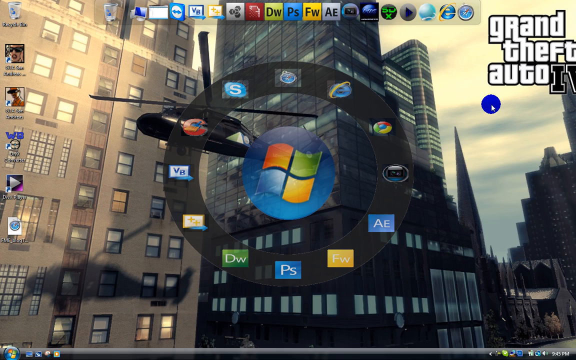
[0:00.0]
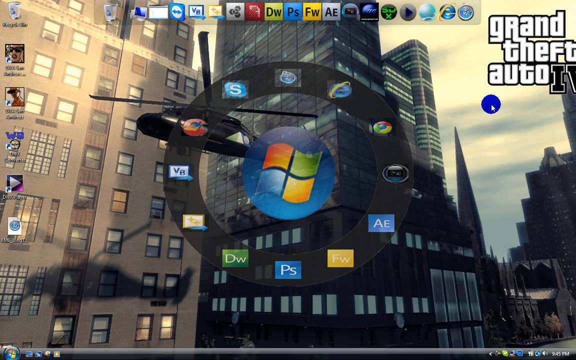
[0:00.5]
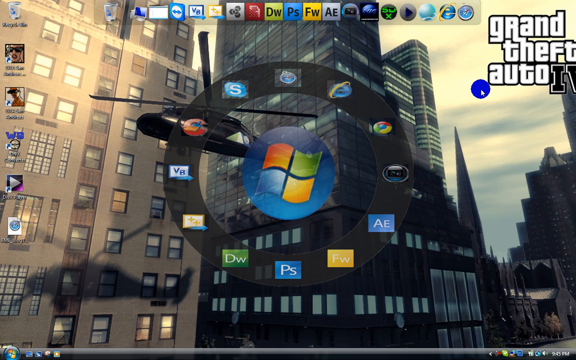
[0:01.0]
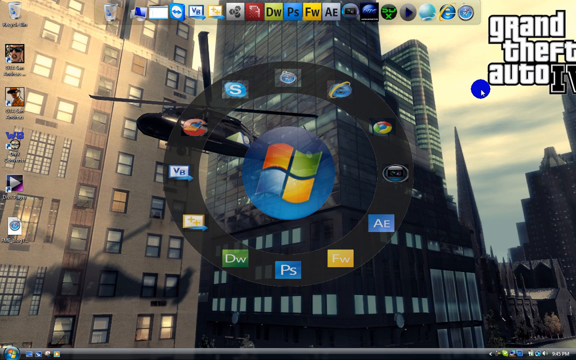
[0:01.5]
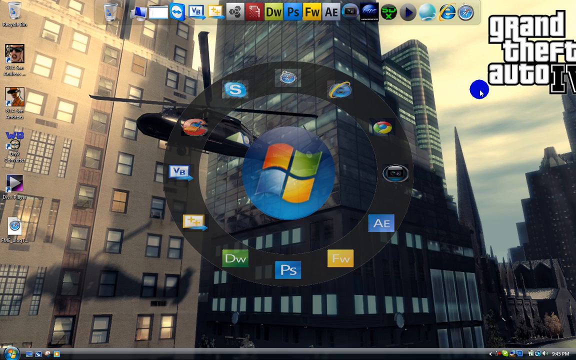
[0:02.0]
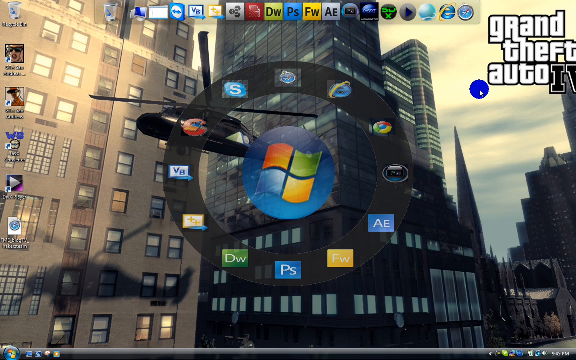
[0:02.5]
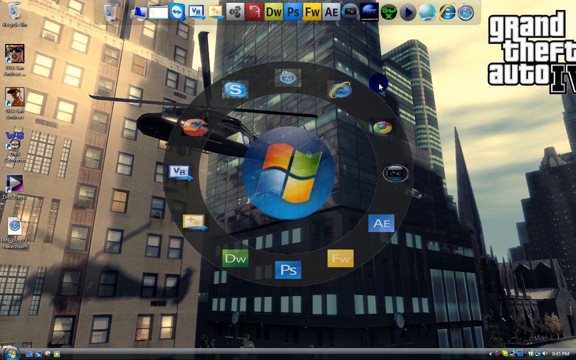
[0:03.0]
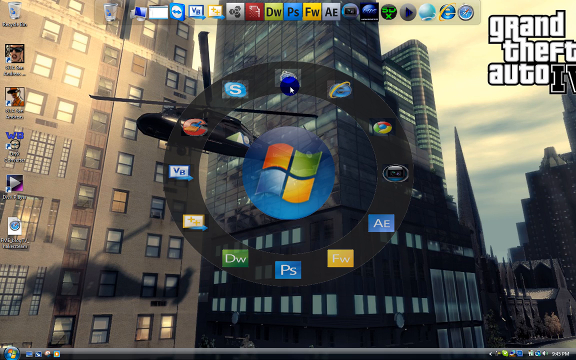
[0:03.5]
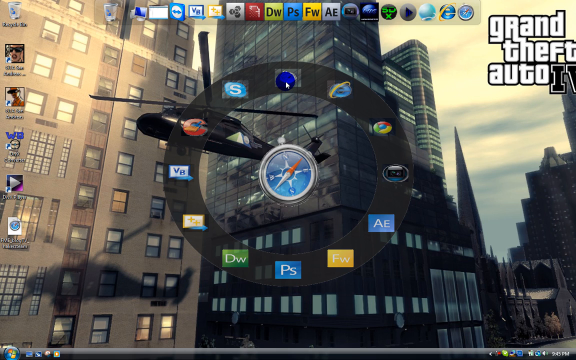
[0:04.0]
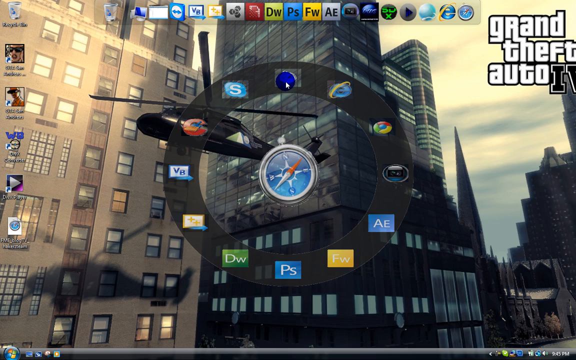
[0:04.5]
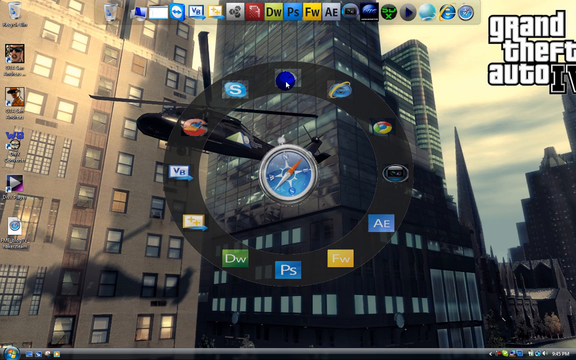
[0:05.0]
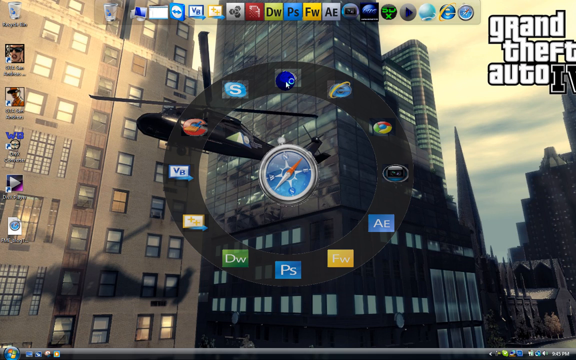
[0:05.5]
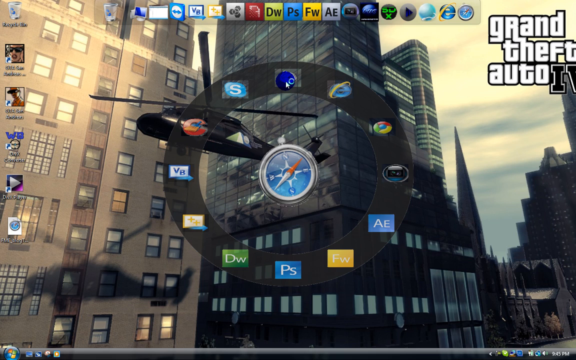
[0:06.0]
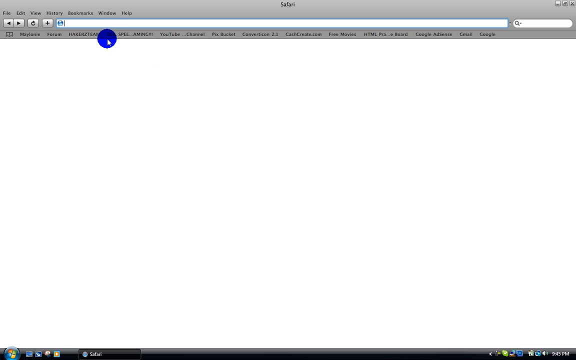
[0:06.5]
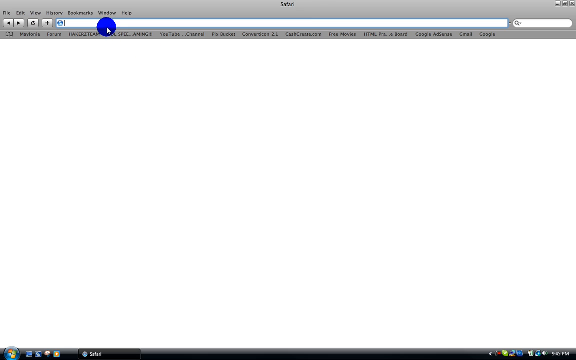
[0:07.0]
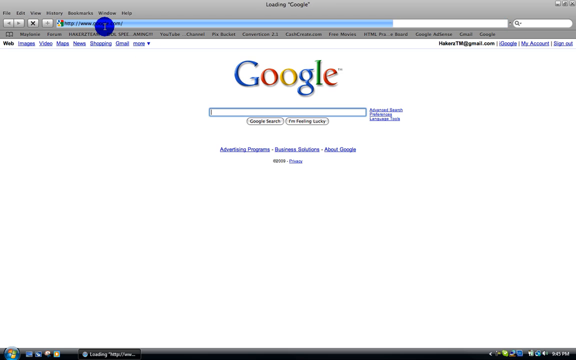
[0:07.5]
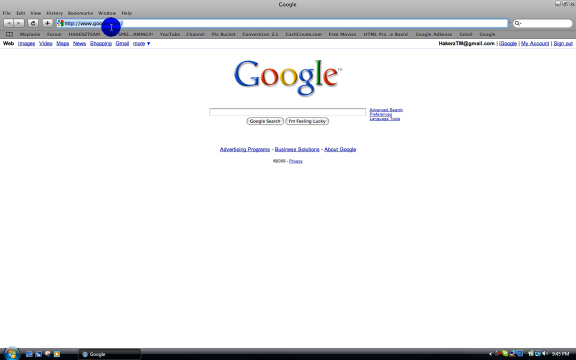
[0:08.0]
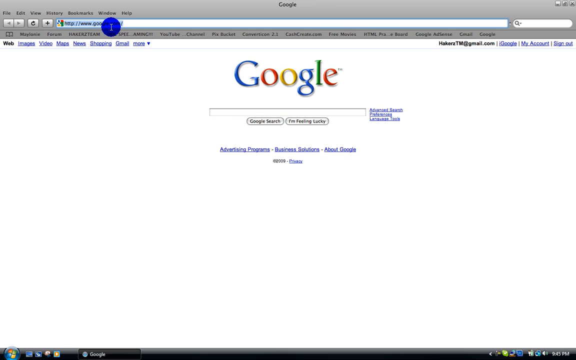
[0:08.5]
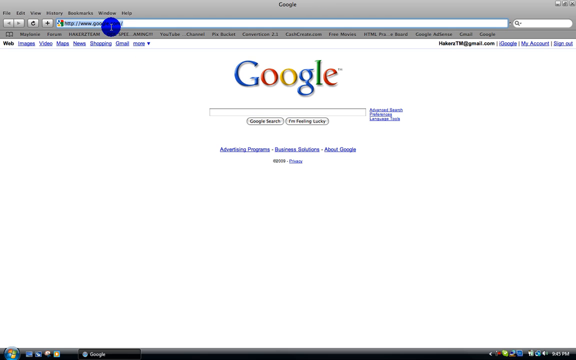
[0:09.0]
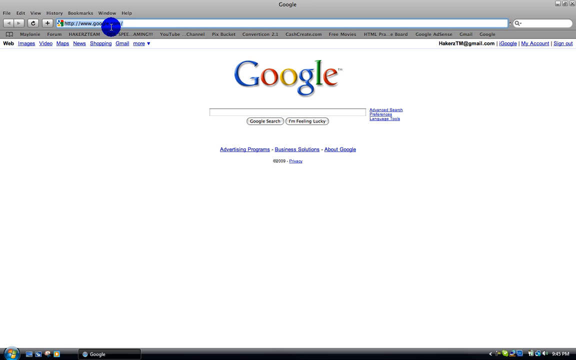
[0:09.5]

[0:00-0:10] A laptop screen shows the Windows operating system, indicated by a Windows icon in the center of the screen. The background has tall buildings and a helicopter, whose shadow falls on a building. Six icons, including the recycle bin, are on the left side, and a few other app icons are at the top of the screen. A black circle surrounds the central Windows icon, and app icons such as Skype, Email and Chrome are arranged inside that circle. At the top right, "grand theft auto" is written in big white lowercase letters with black borders. The pointer, which has a blue circle, moves toward the top of the black circle to the browser icon surrounding the Windows icon and clicks it, opening the Safari browser with the Google search engine.